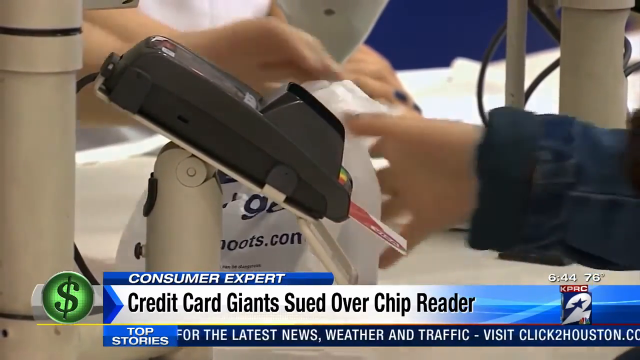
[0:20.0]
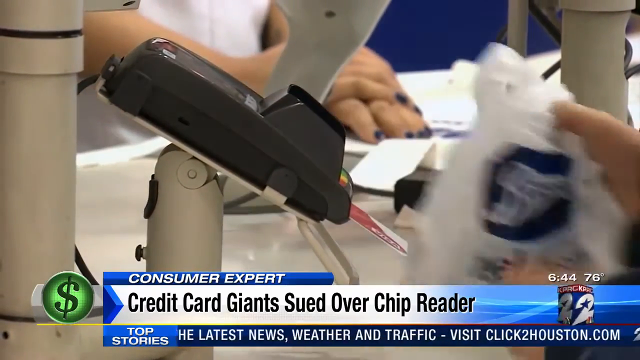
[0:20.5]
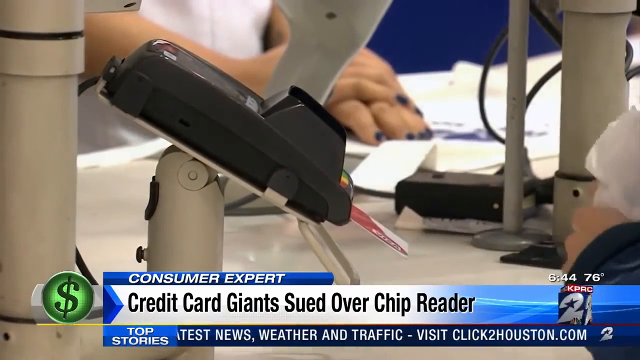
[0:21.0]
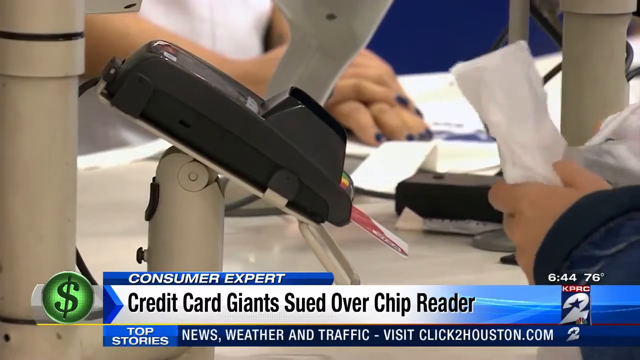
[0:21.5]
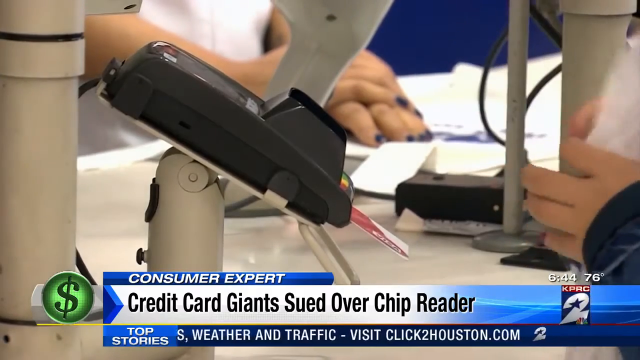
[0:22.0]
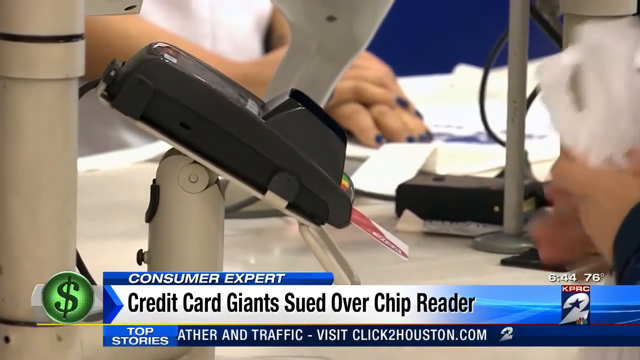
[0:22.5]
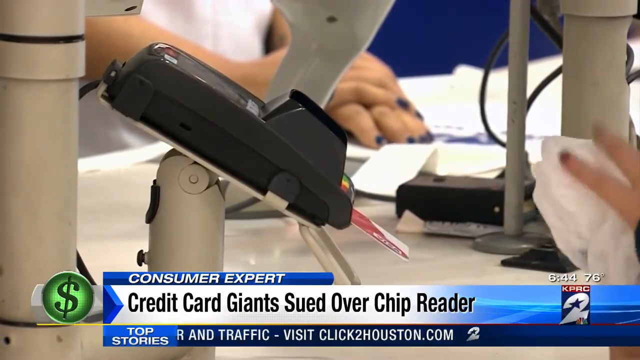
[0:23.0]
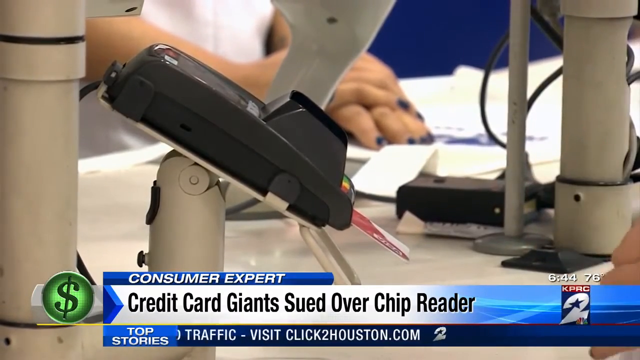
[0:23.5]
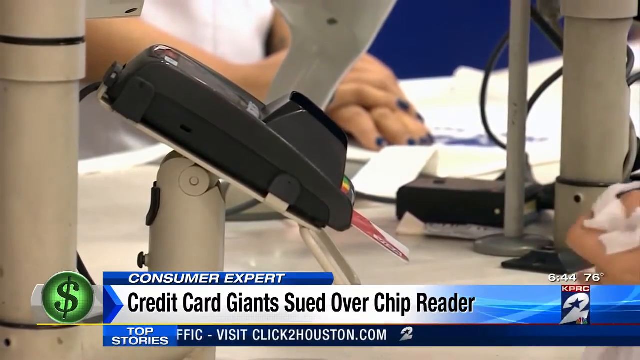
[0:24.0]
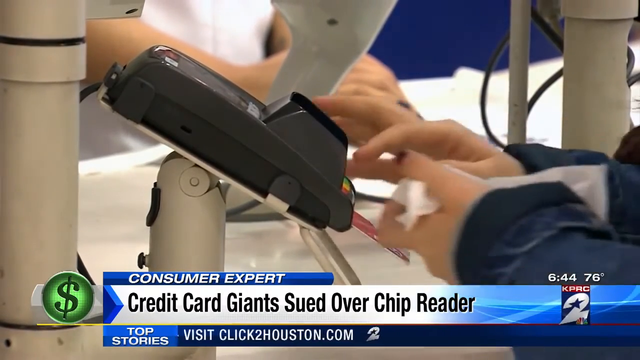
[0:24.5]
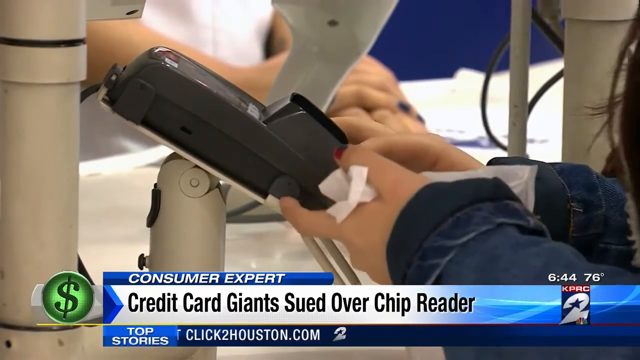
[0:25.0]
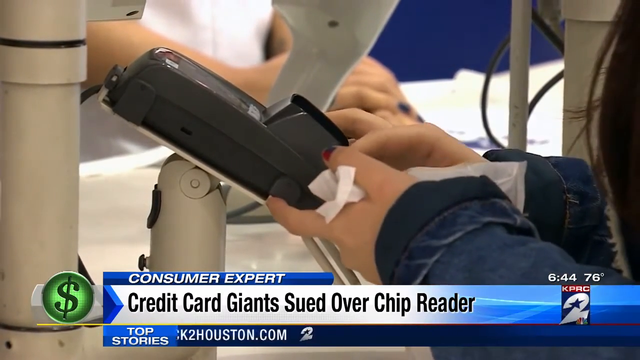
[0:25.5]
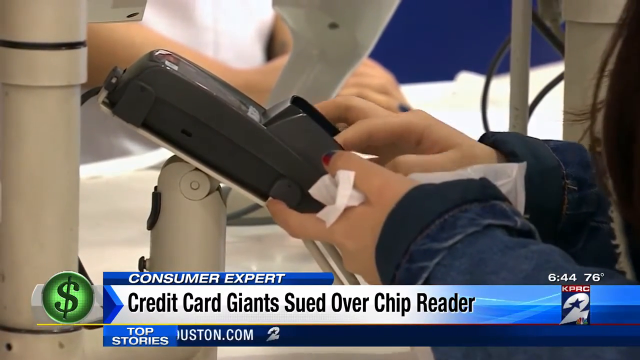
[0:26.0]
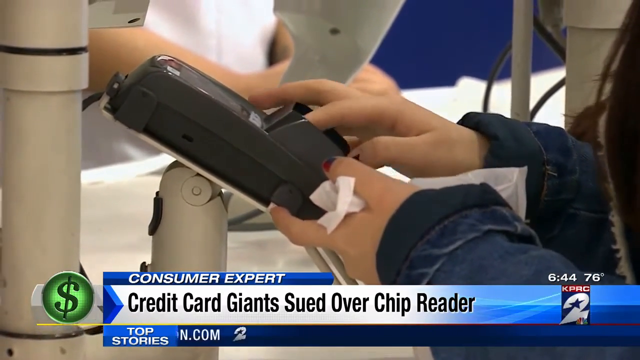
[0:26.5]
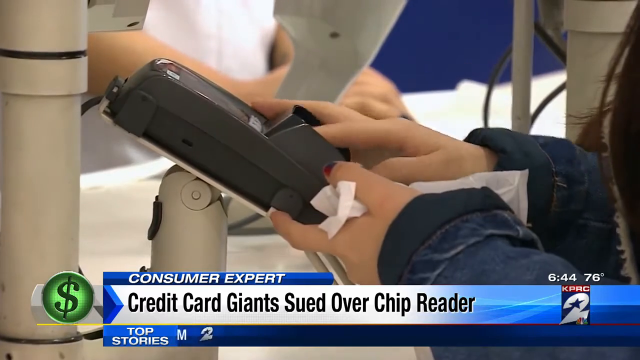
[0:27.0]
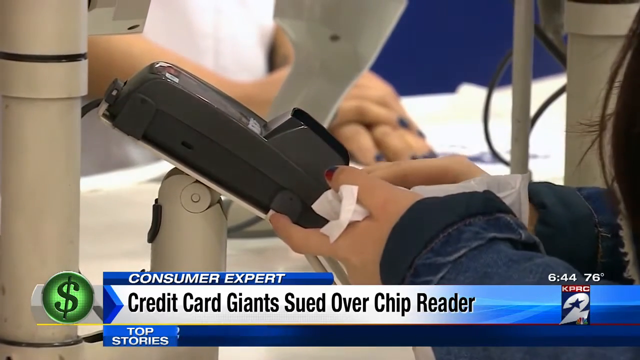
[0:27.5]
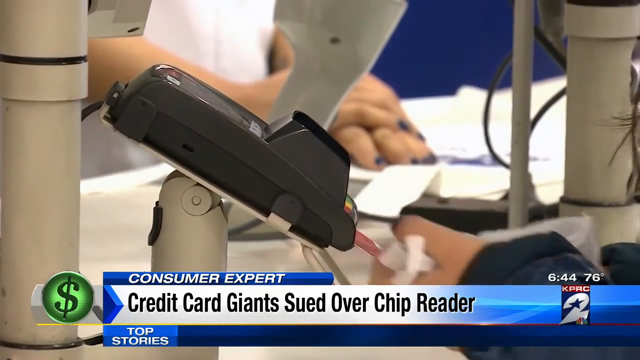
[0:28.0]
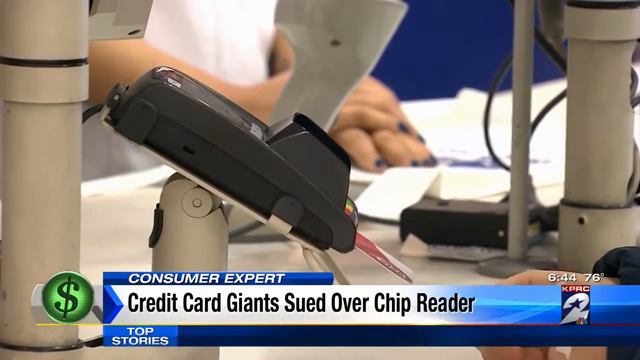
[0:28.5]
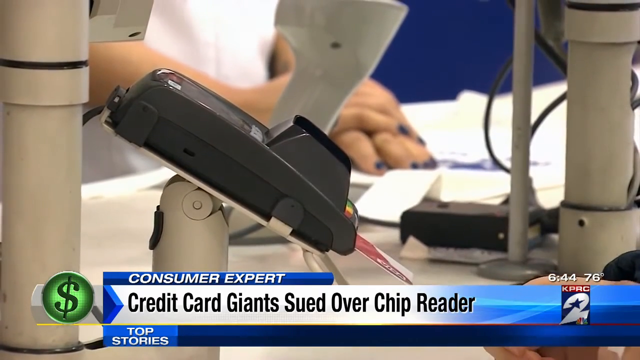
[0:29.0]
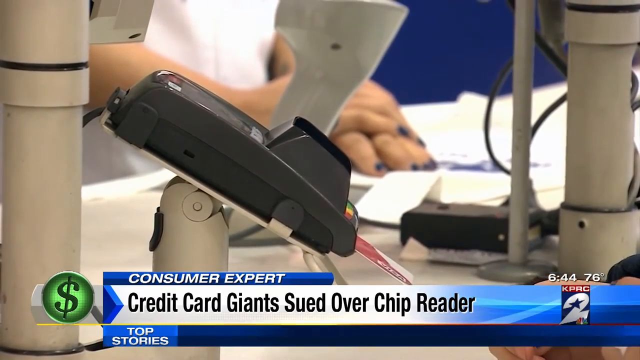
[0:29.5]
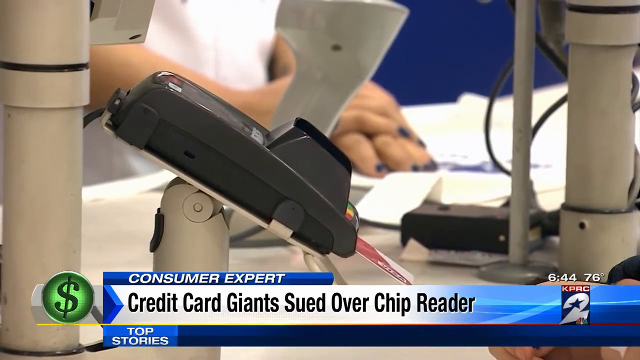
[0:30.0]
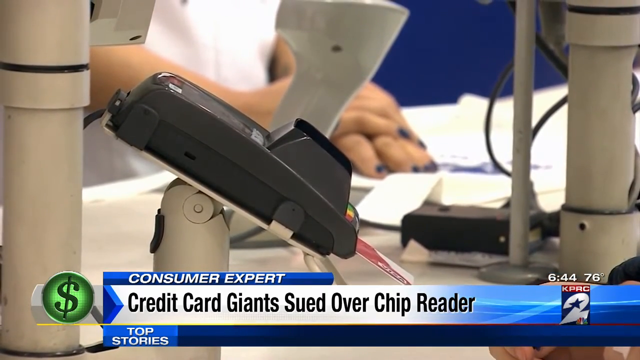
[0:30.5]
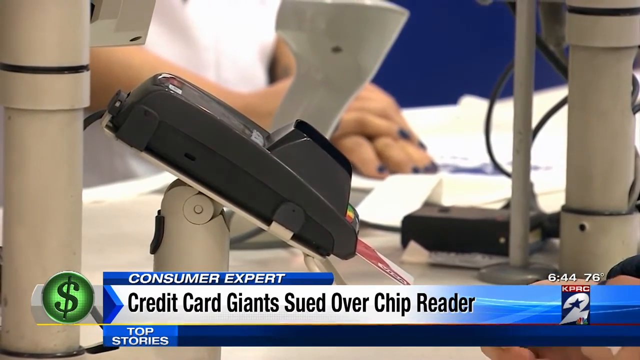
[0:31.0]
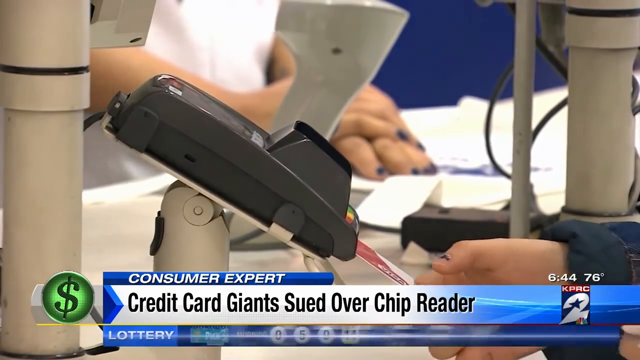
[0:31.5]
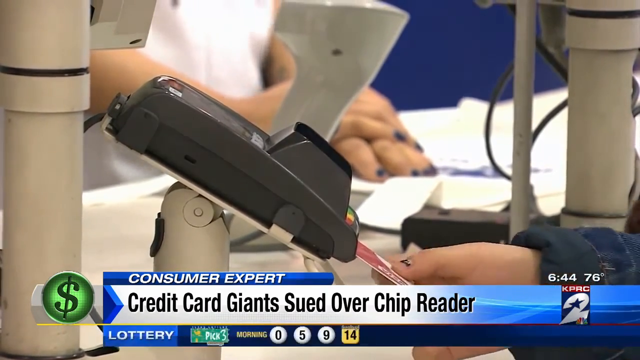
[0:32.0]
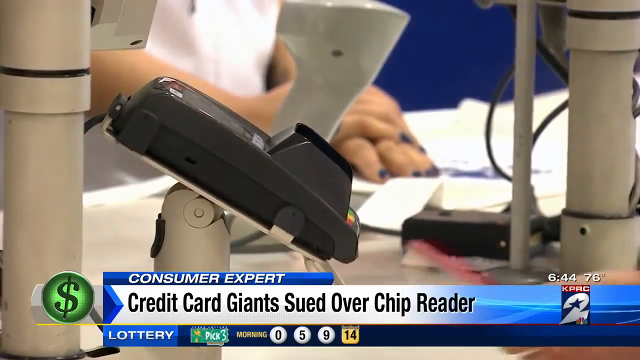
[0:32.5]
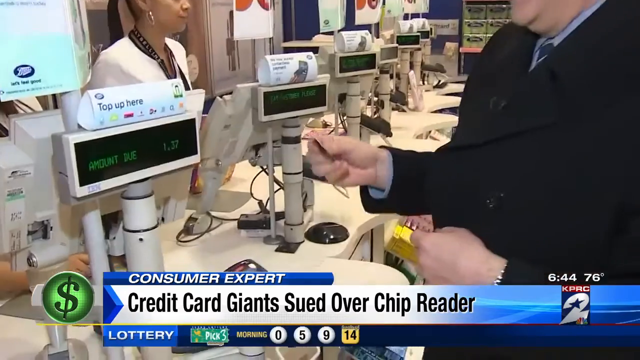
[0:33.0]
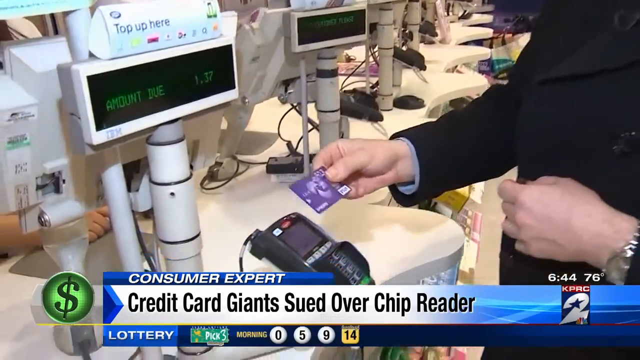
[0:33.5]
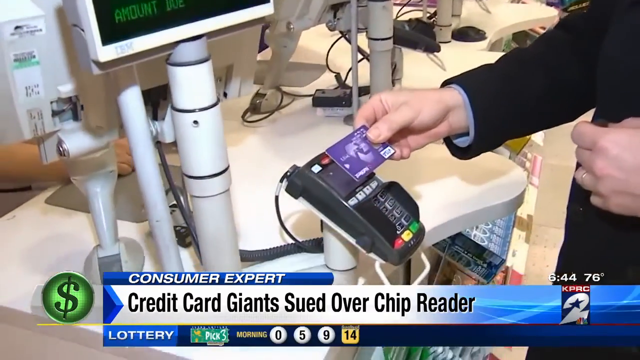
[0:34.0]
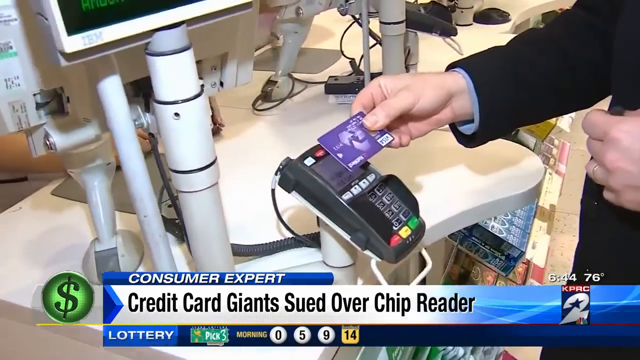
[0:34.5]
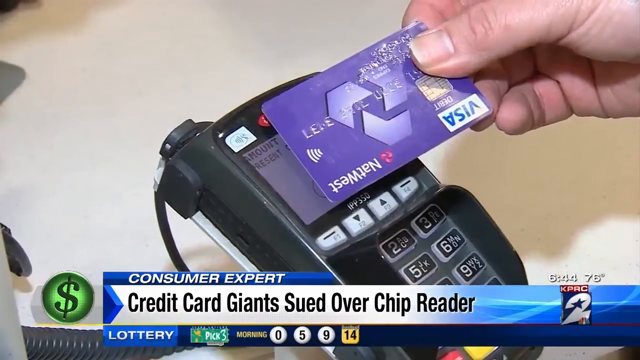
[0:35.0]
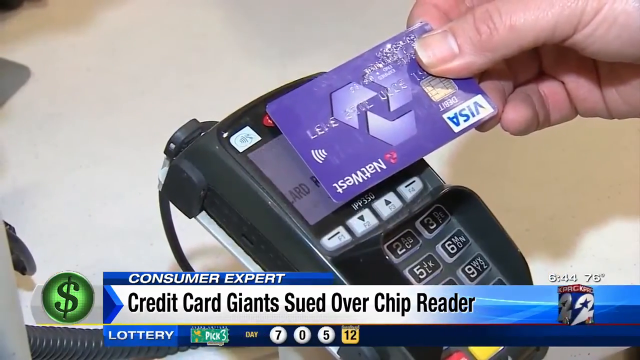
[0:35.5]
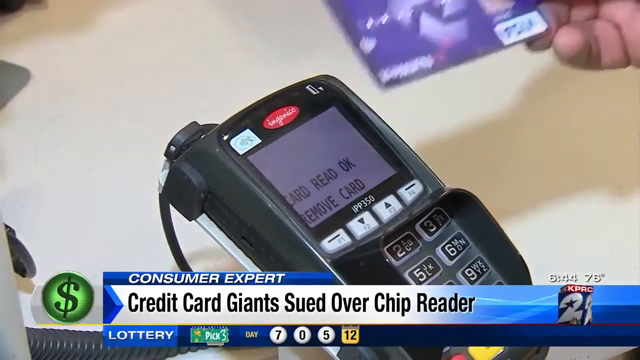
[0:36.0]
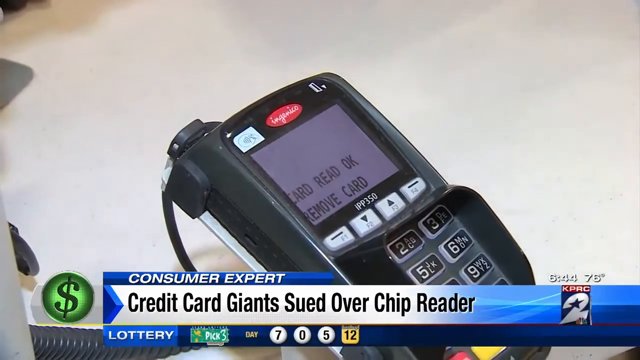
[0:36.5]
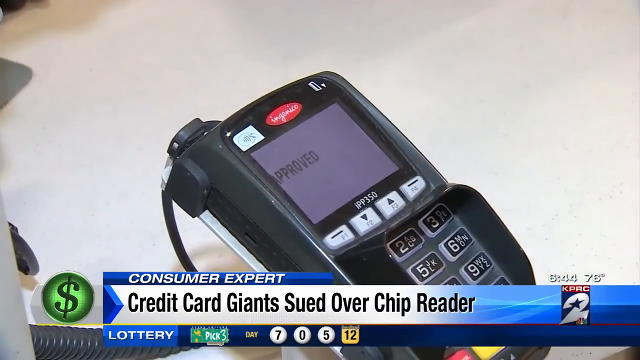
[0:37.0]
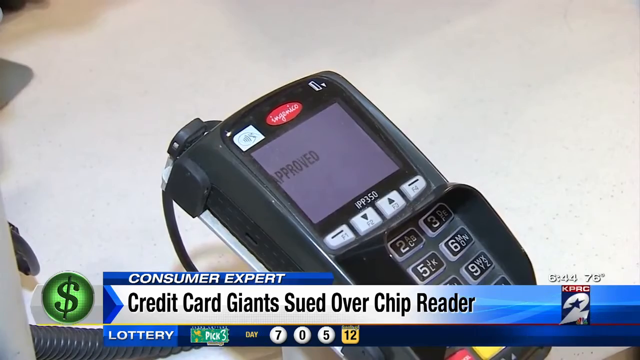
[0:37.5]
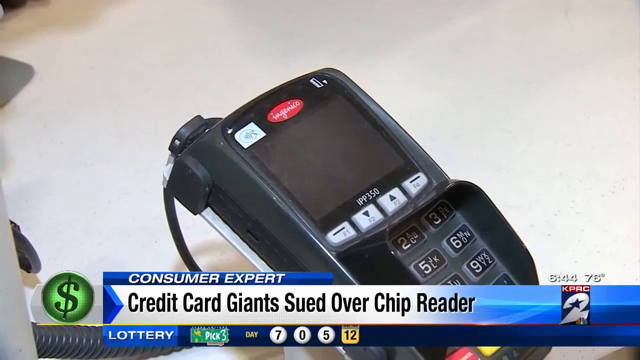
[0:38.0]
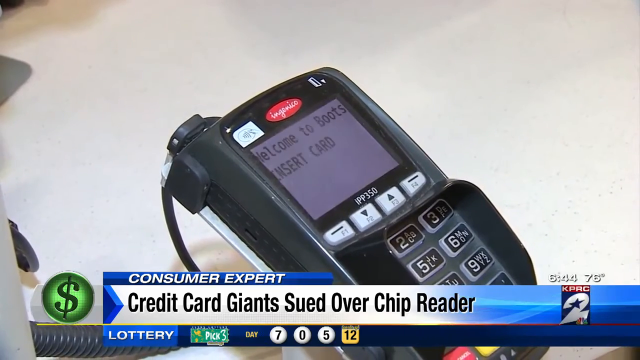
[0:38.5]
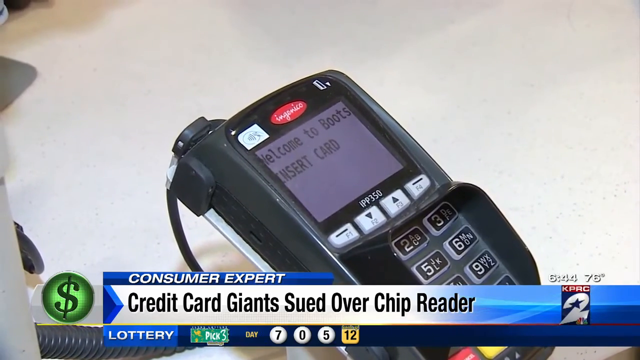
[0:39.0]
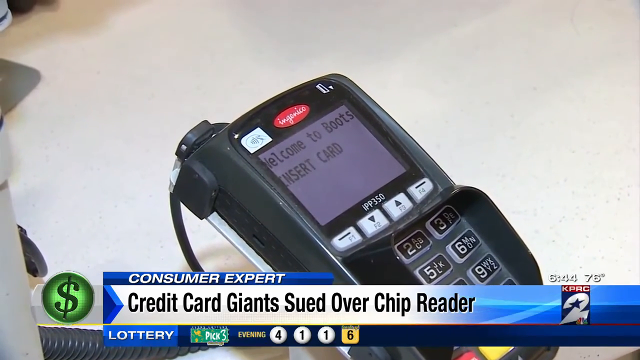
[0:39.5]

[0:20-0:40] A woman has inserted a red and white credit card into the speed point and enters her PIN, waits a few seconds for the transaction to process, takes out the card and takes the product she is buying. A man wearing a suit then places a purple card on top of the speed point to tap it instead of inserting it. The purple card is a Visa from NatWest, and the speed point machine is an Ingenico. The screen says "approved," and afterwards the text reads "welcome to boot, insert card to make another transaction." The payments take place at a till, with the cashier on the other side, and the amount is displayed on the till's screens.